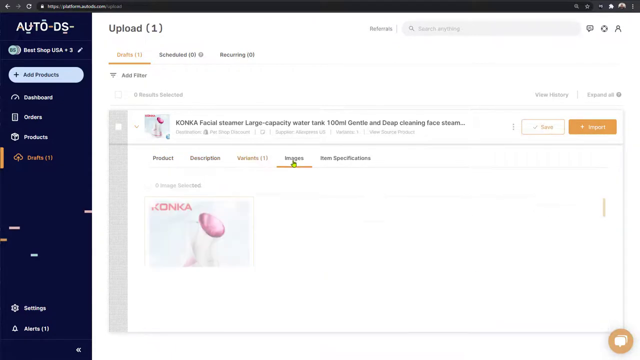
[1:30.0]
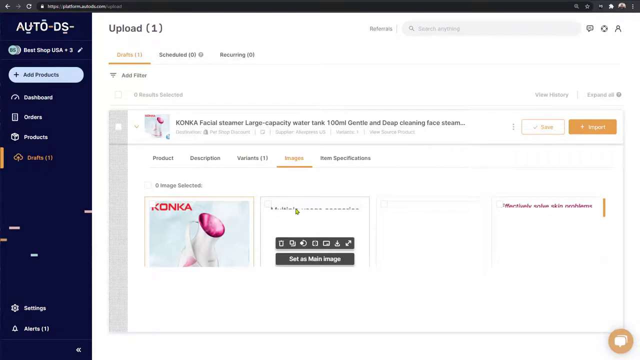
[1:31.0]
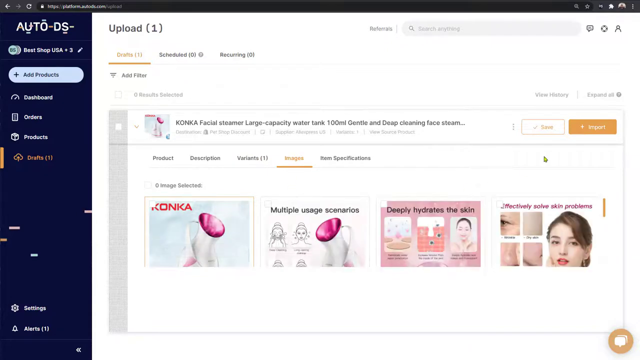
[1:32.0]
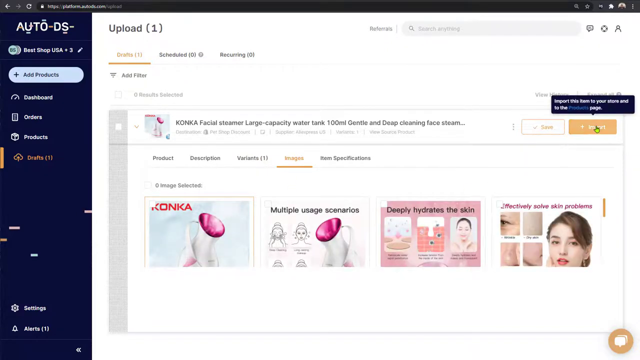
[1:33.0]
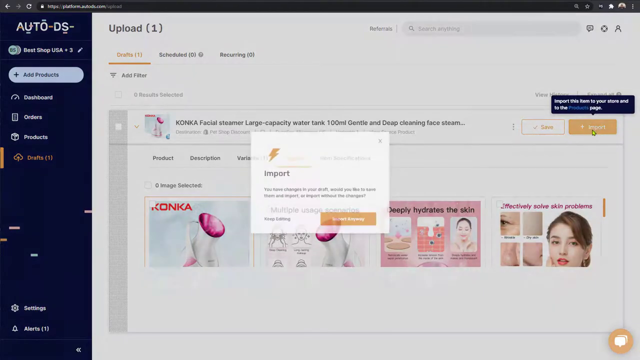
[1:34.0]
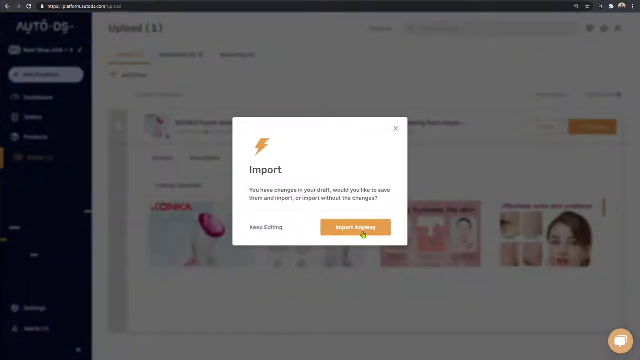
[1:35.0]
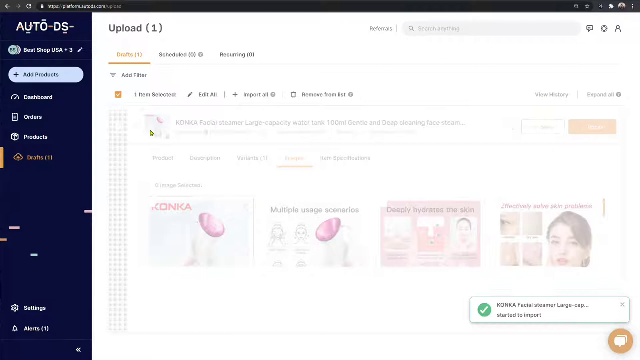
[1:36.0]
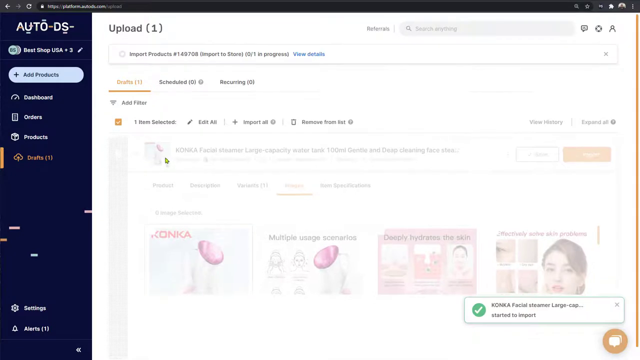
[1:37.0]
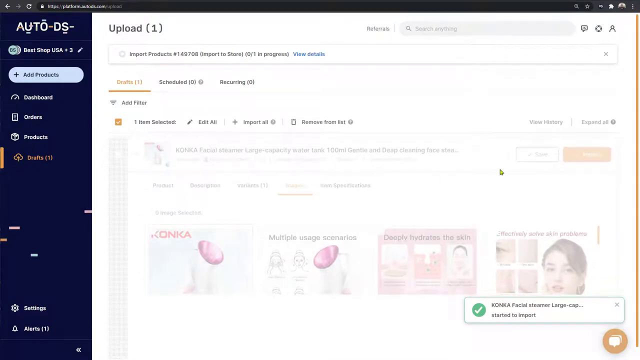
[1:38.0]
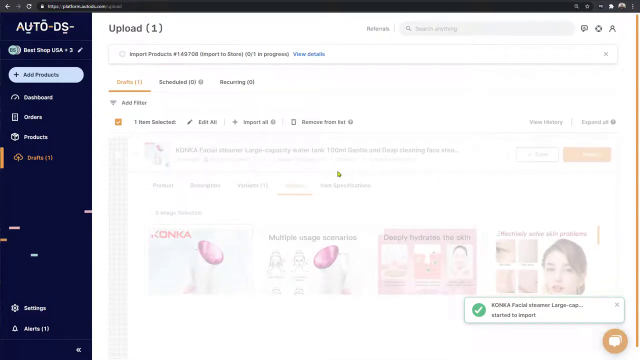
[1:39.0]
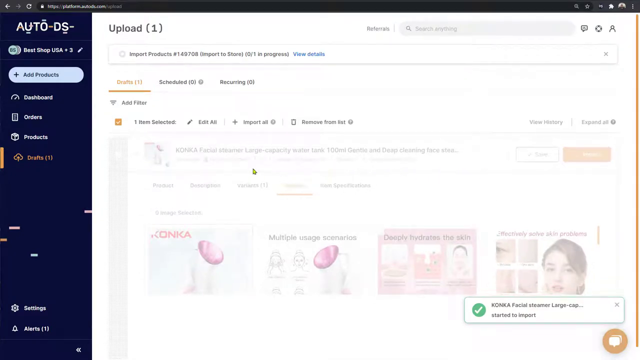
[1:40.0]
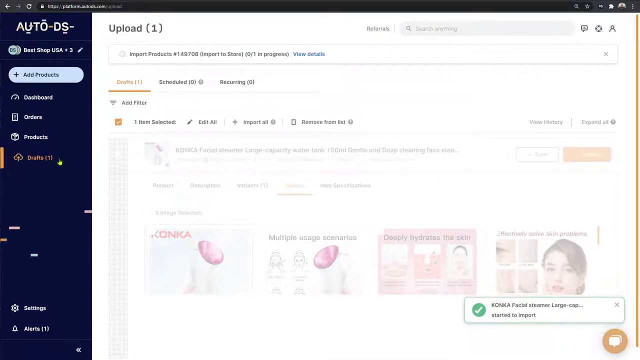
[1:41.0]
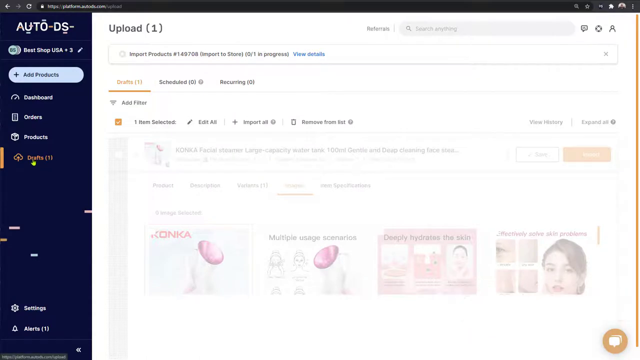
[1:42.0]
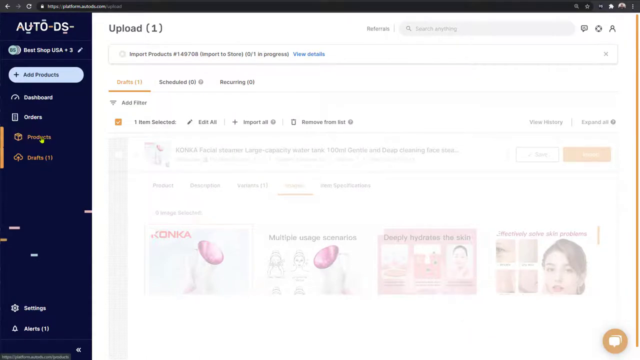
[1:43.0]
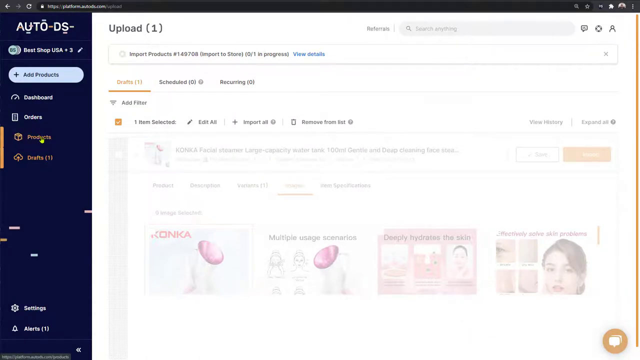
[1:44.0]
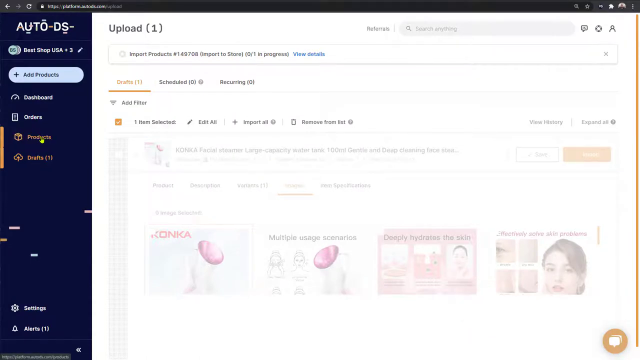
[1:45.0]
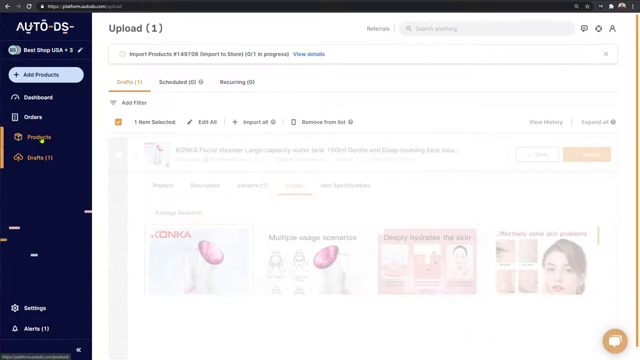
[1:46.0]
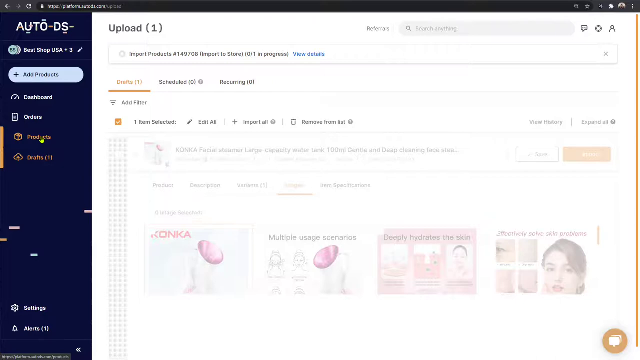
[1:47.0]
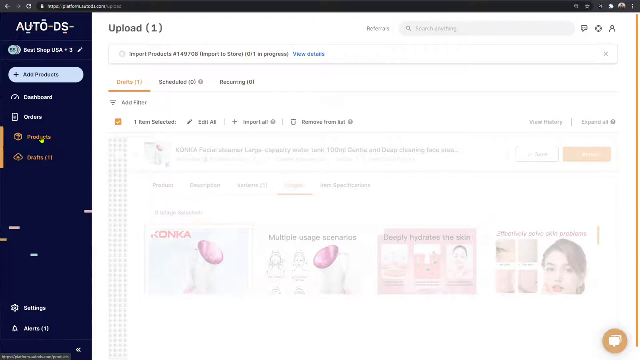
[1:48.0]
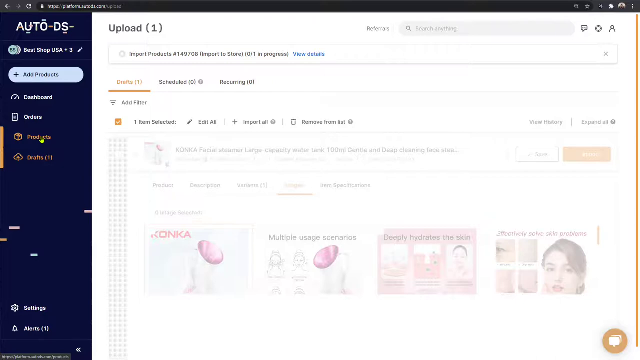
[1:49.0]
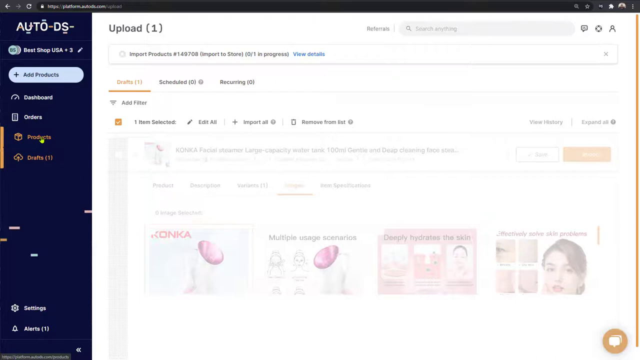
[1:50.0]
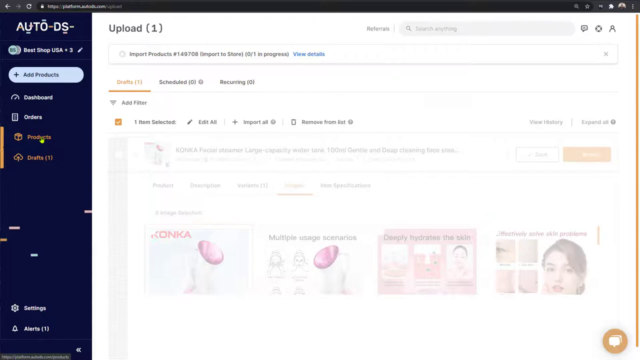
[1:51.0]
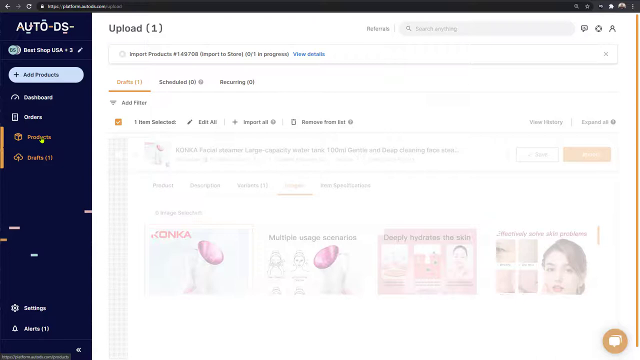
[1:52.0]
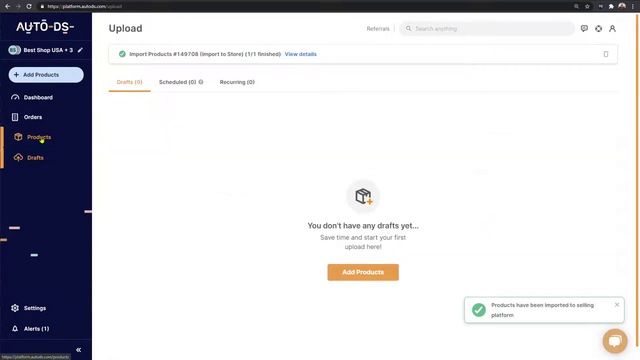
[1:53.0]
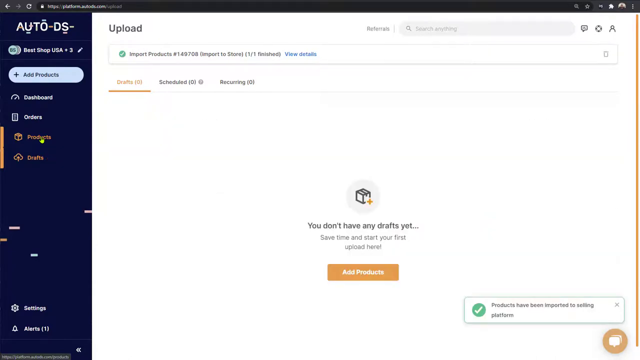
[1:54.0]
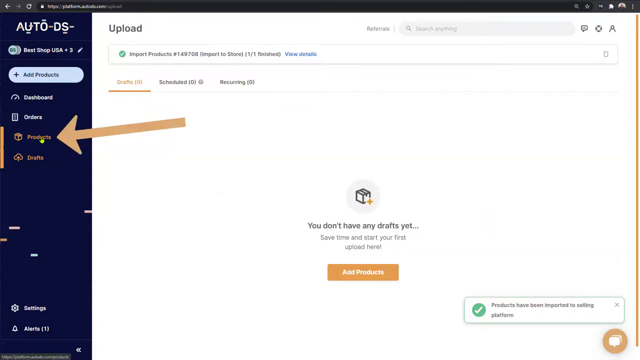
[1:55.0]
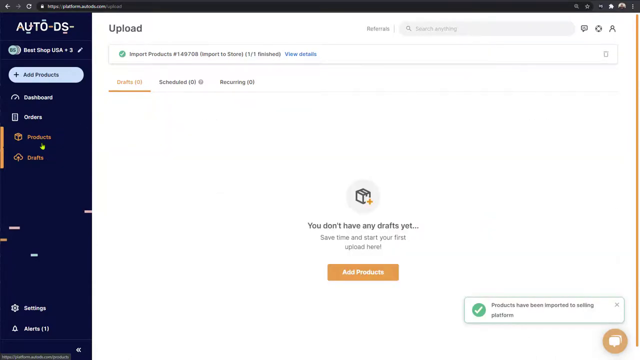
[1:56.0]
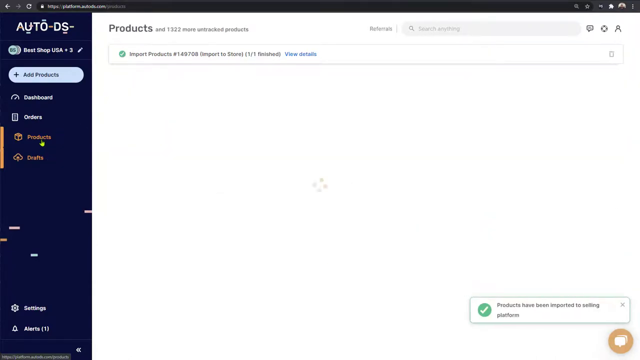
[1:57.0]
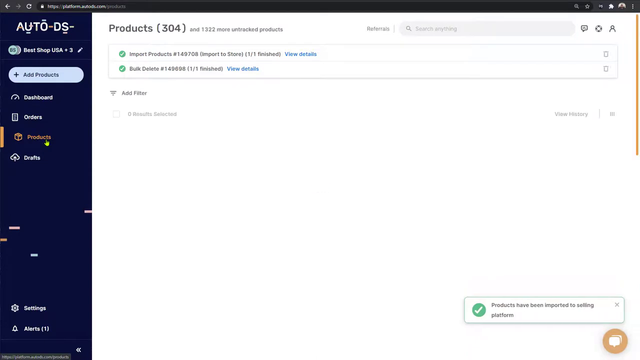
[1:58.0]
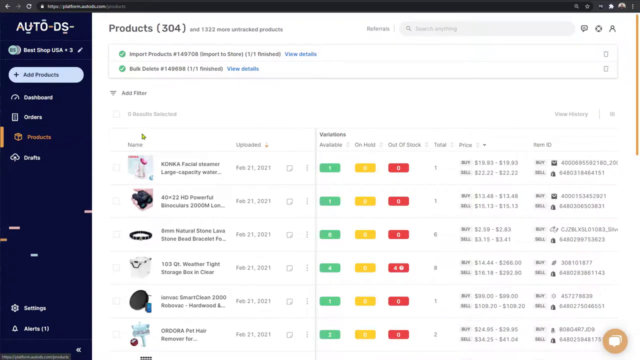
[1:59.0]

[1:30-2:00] In the store area, black text at the top reads "upload (1)." The product title reads "KONKA facial steamer, large capacity water tank" and "100 ml gentle and deep clean and face steam." Beneath it are tabs labeled "product description," "variance," "images" and "item specification." The person appears to be in the images section, which is underlined in orange. They click on "import," and the screen is slow and faded, apparently still importing different images of the product. Text then reads "we don't have any drafts yet." An arrow points, and the person finds the product again.